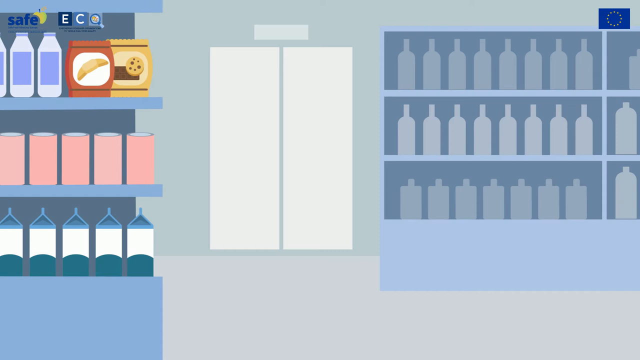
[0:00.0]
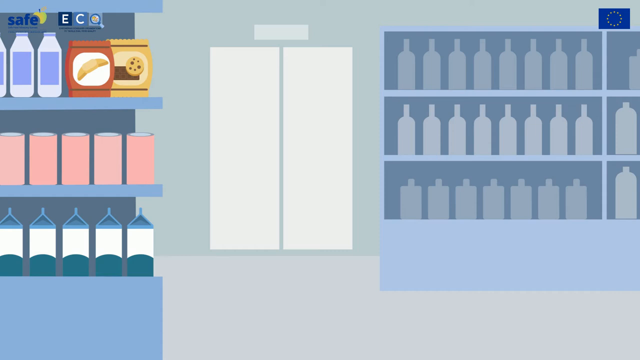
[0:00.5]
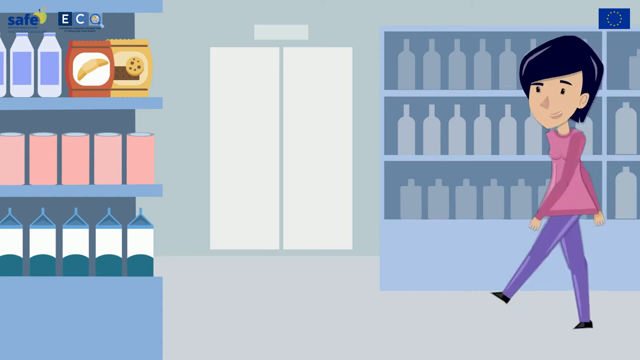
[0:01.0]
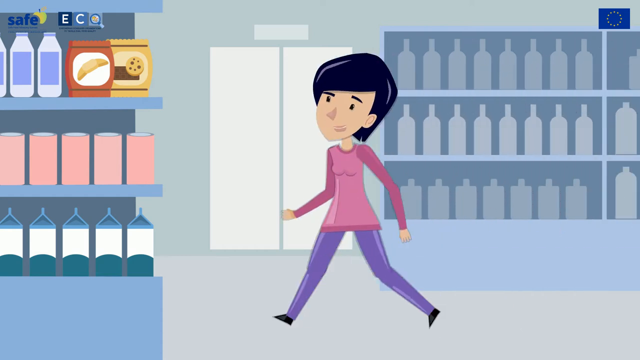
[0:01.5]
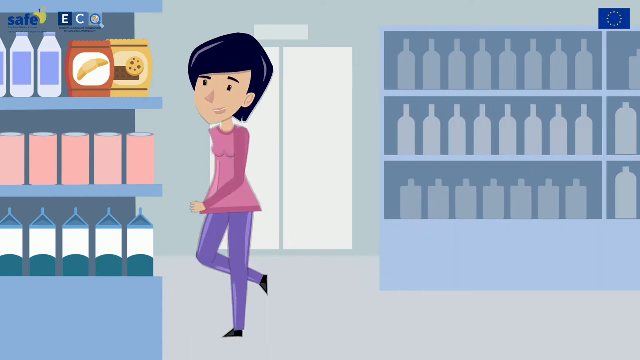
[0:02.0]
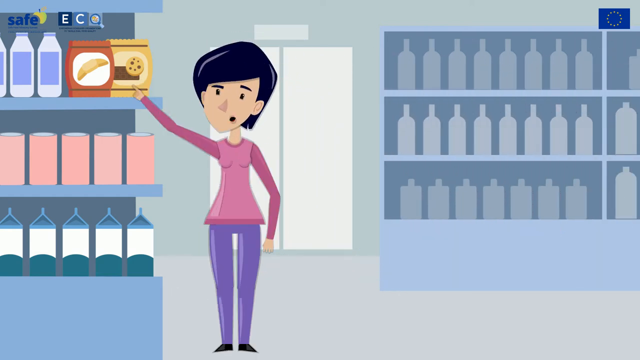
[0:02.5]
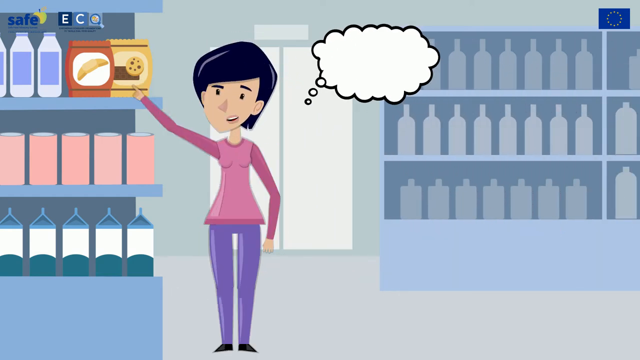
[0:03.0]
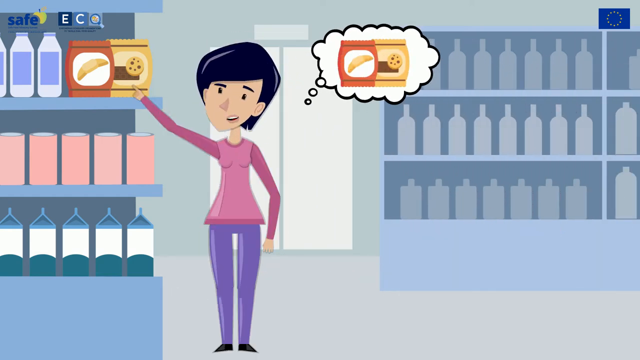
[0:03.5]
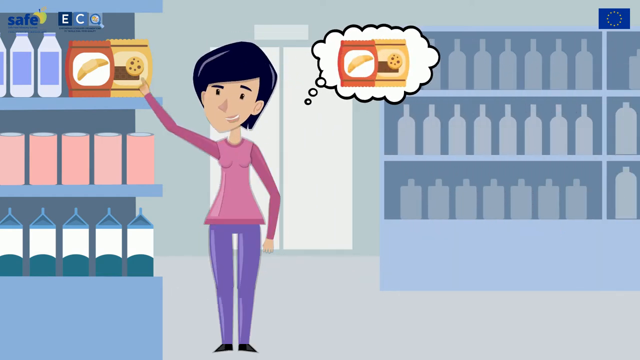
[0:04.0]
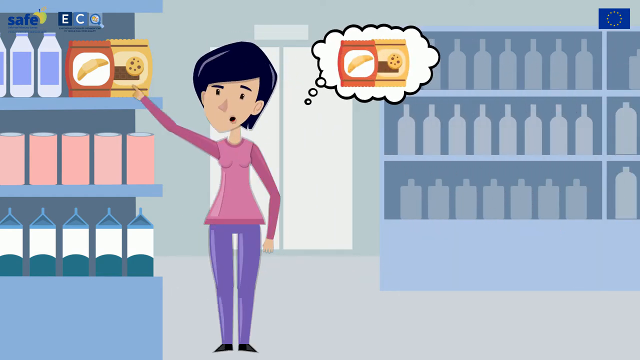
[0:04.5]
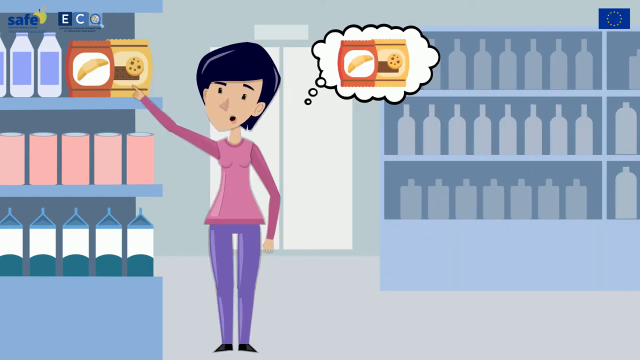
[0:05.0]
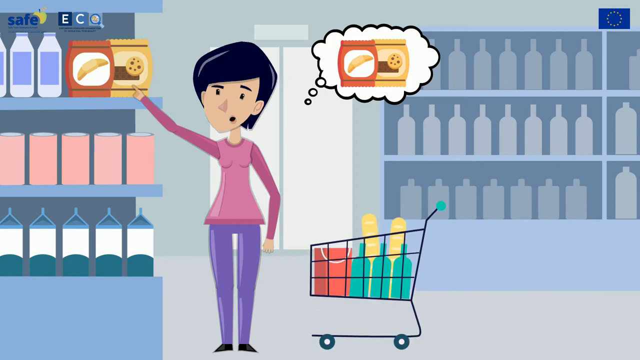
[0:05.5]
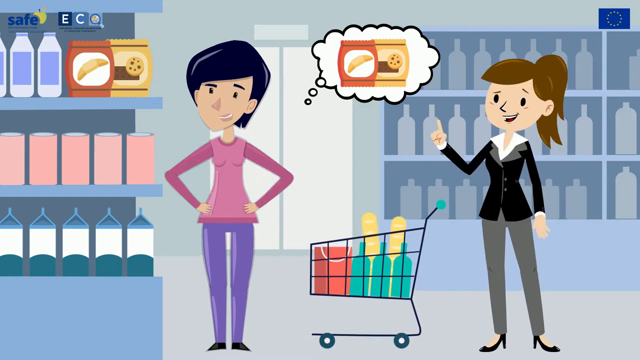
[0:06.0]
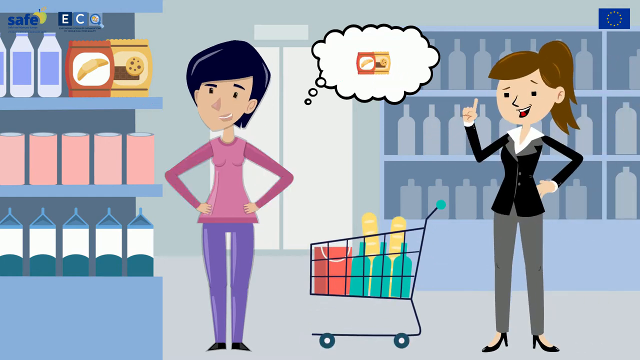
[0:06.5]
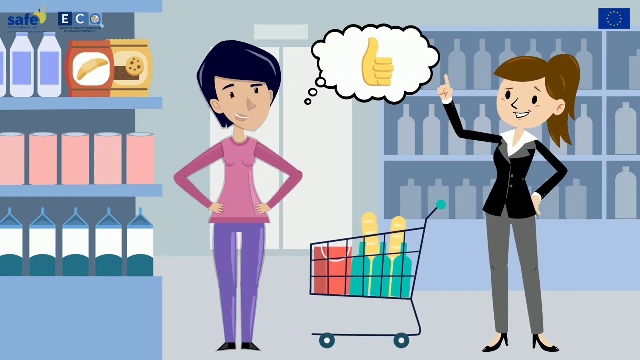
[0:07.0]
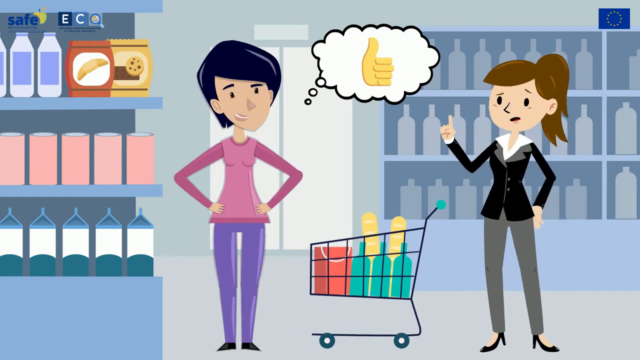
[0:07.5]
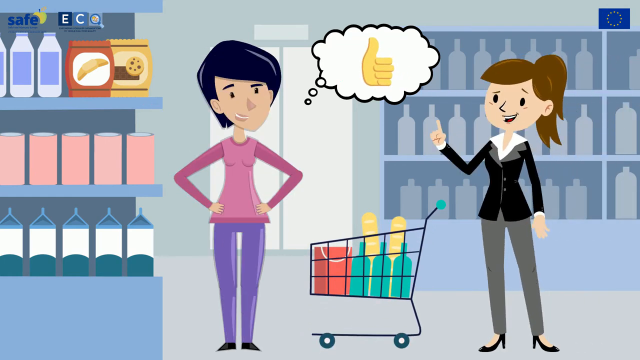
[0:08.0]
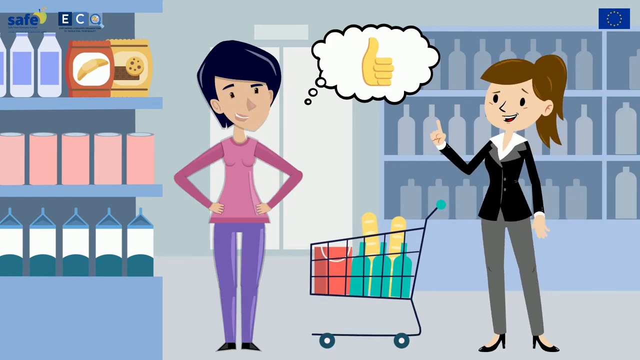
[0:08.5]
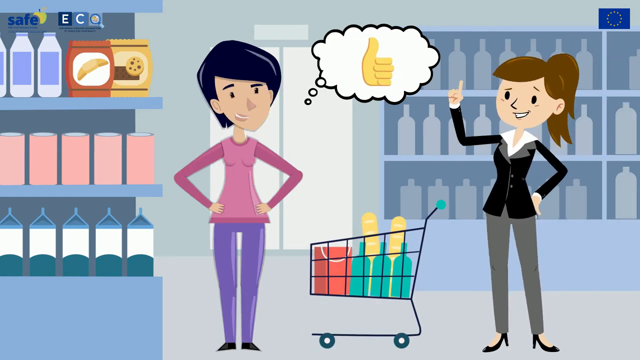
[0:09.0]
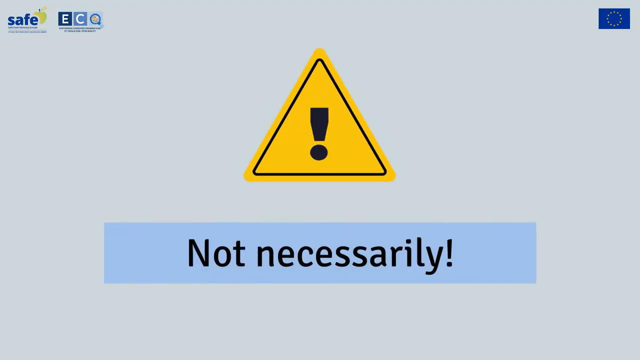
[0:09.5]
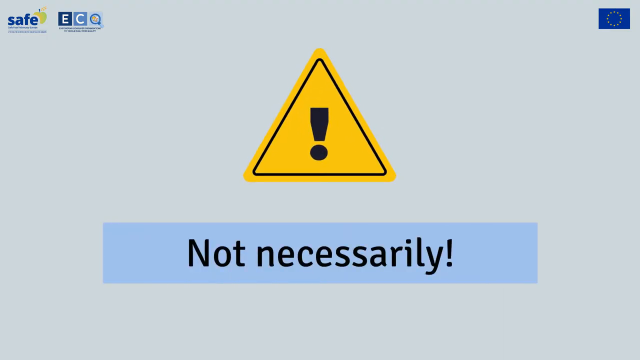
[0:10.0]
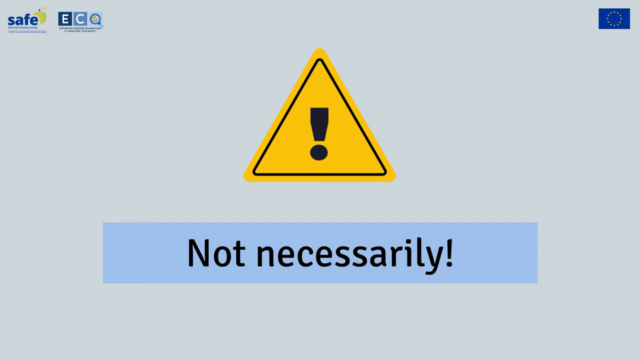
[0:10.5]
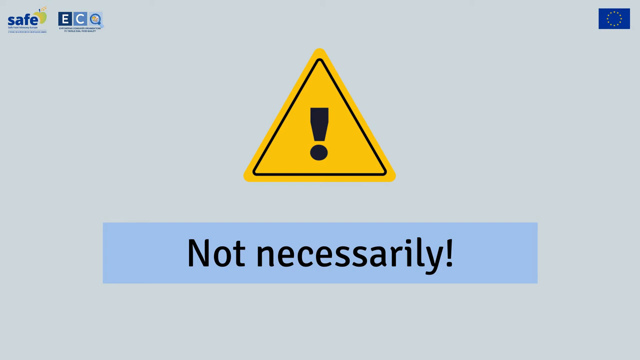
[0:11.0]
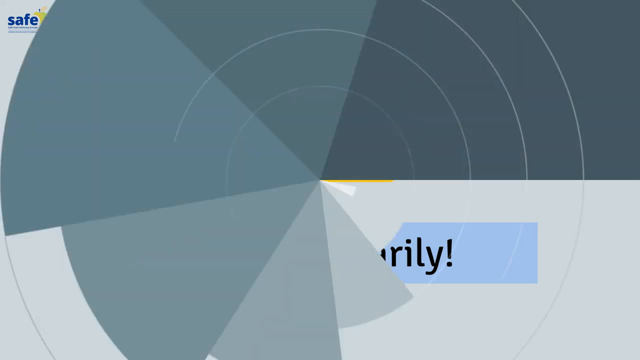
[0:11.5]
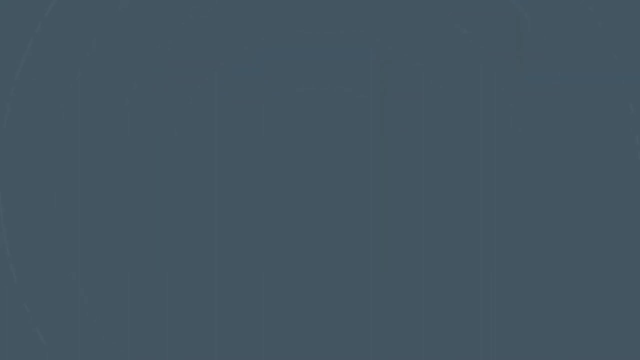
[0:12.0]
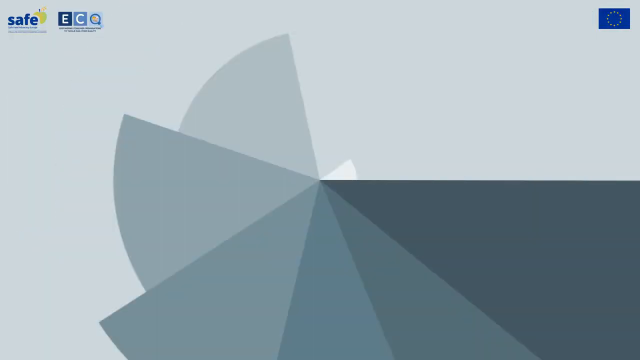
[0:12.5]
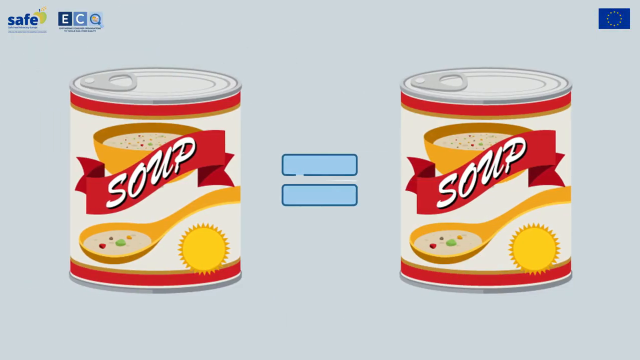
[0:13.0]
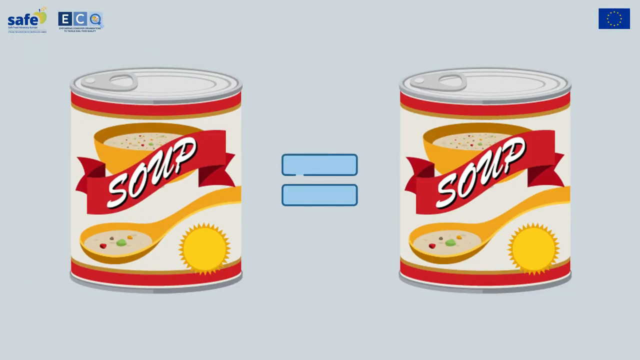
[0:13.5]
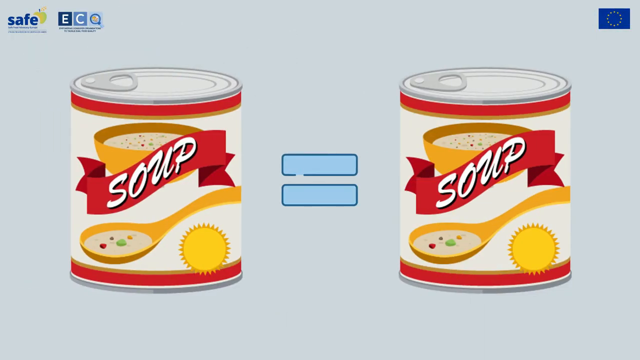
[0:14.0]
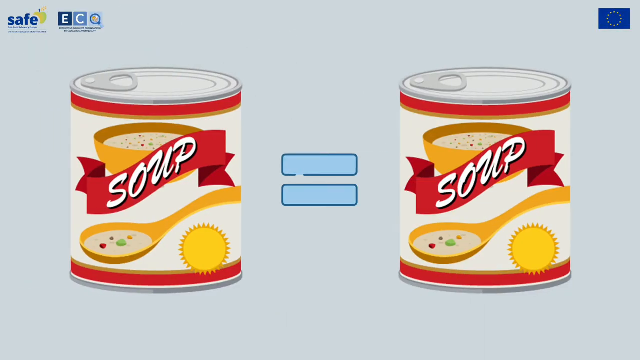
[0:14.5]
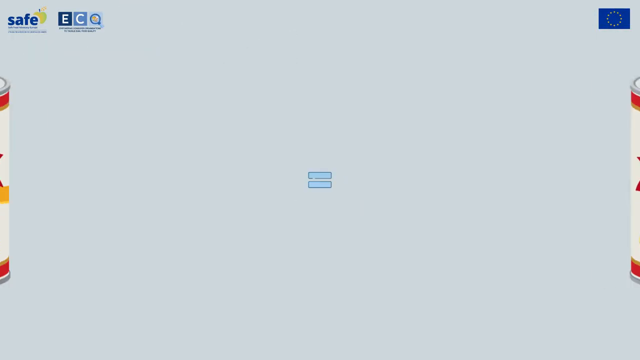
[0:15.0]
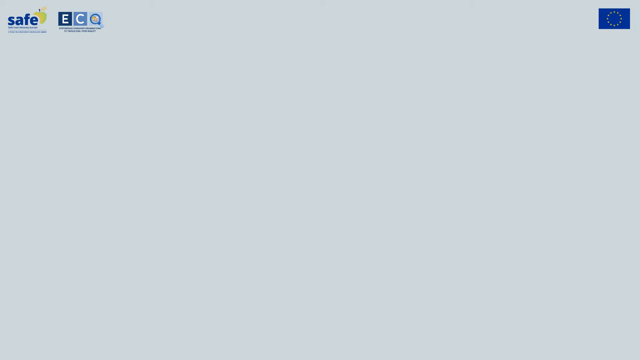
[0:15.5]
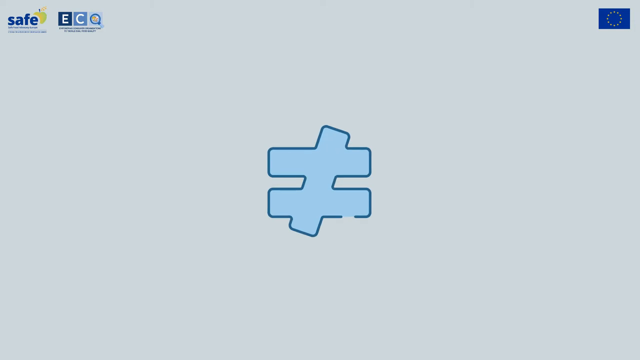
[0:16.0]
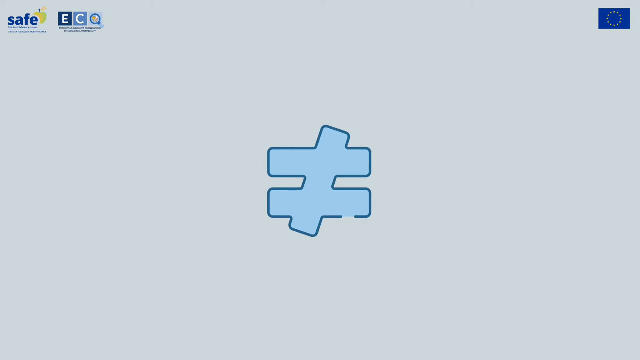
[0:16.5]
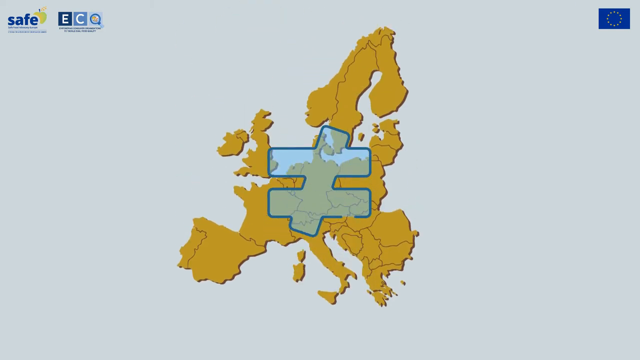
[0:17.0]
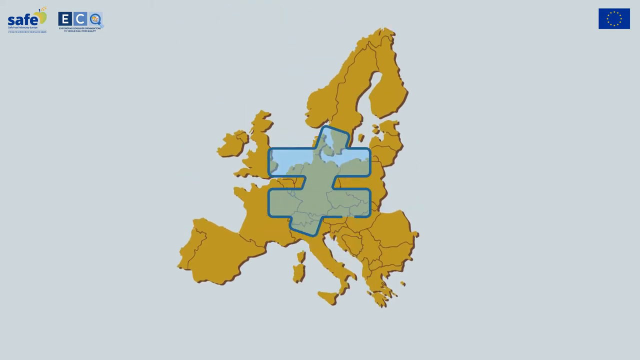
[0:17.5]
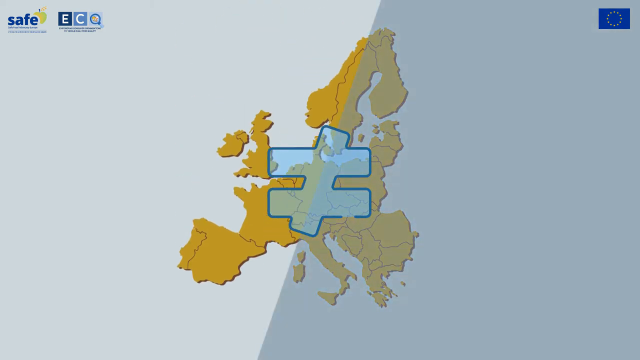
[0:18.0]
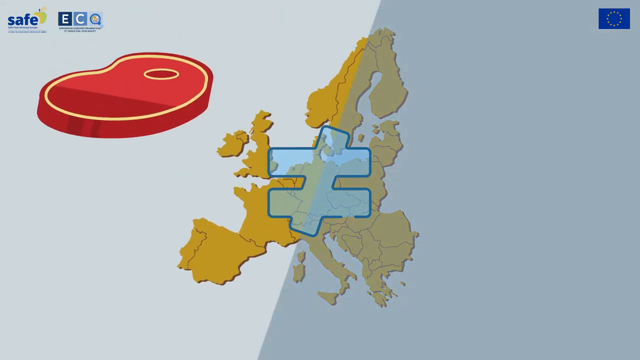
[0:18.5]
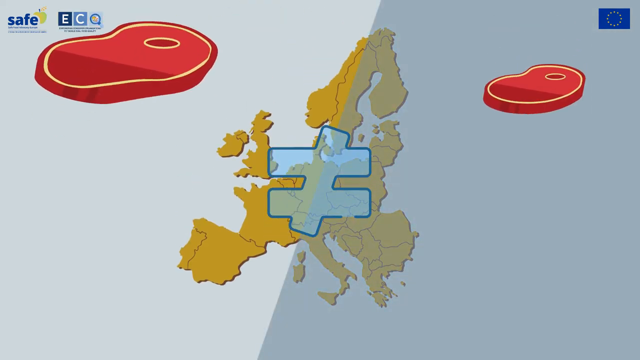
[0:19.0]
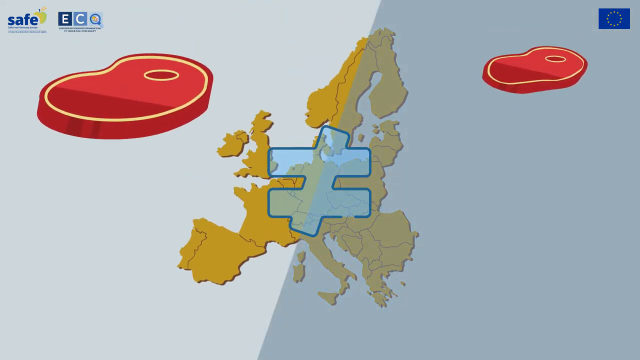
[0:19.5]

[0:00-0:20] The video looks cartoonish and may take place in a grocery store. There are blue shelves with items on them, and in the center is a white door. On the shelves to the left there appear to be some glass jugs, a package of cookies in a red bag and another package of cookies in a yellowish bag. Below this, on the middle shelf, are pink cans, and underneath that there are possibly milk cartons of some sort, light blue on top, white in the middle and navy blue at the bottom. The shelf to the right seems to hold some sort of wine bottles, but it is grayed out so that only the shadows of the bottles can be made out. A lady walks in from the right side of the screen. She has neck-length black hair, is possibly white, and wears a long-sleeved top with dark pink sleeves and a lighter pink body, what looks like blue jeans, and black shoes. She points to the cookies, and a bubble pops up beside her containing both packages of cookies. A grocery cart pops up in the middle with a bag and two green bags with bread sticking up out of them, and then a lady appears to the right. She wears a black long-sleeved blazer and gray pants, and her brown hair is pulled back in a ponytail. The video then switches to an exclamation point in a yellow triangle representing caution. It spins around to a blank screen, then spins back to two cans of soup with a light blue equal symbol between them. The soup cans have a white background, and there is a spoon with soup. Then an equal sign with a slash through it appears, a picture of a map pops up in the background, and a picture of what is possibly a steak appears on the right side, with a smaller steak on the left side.